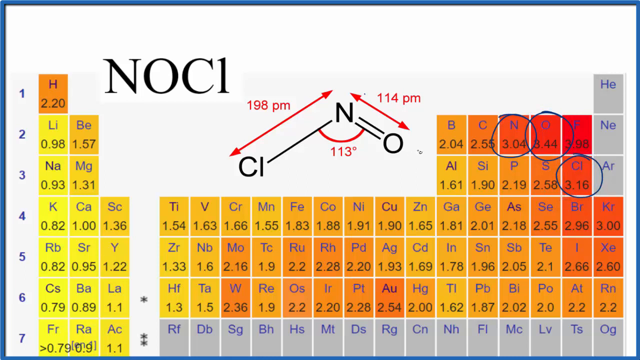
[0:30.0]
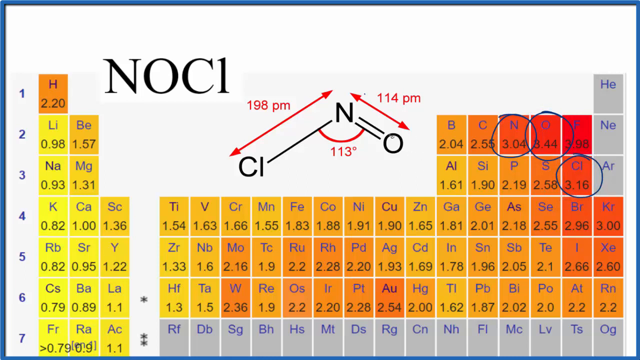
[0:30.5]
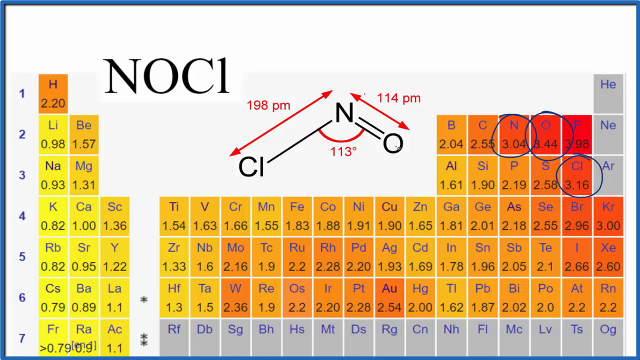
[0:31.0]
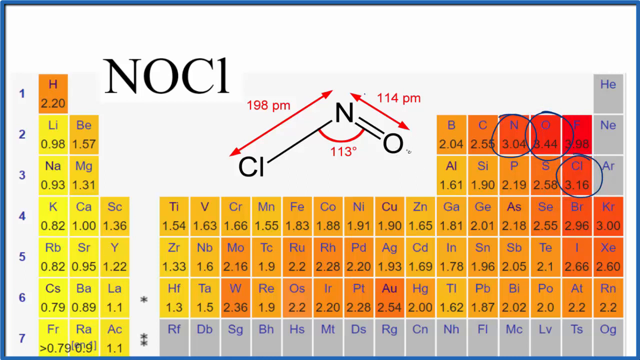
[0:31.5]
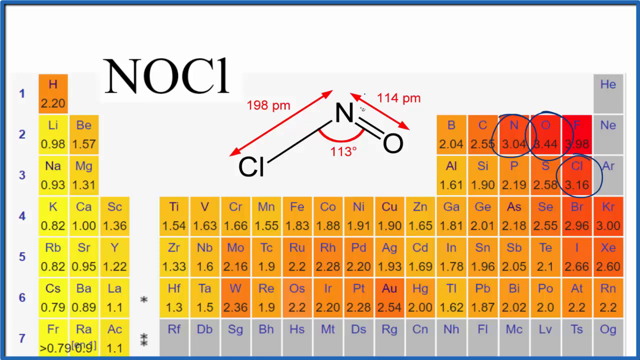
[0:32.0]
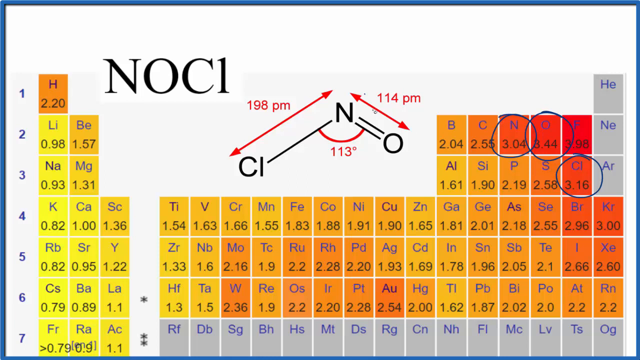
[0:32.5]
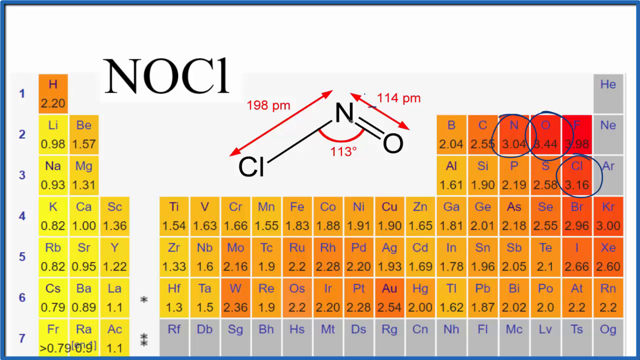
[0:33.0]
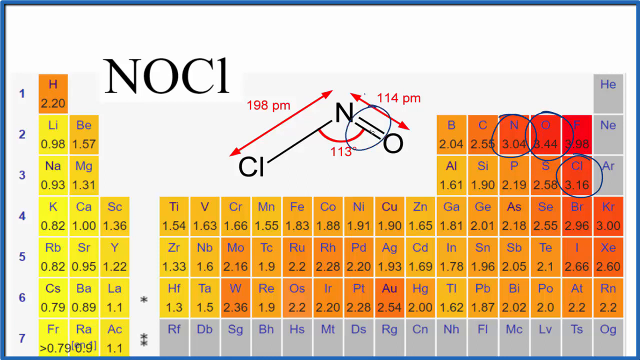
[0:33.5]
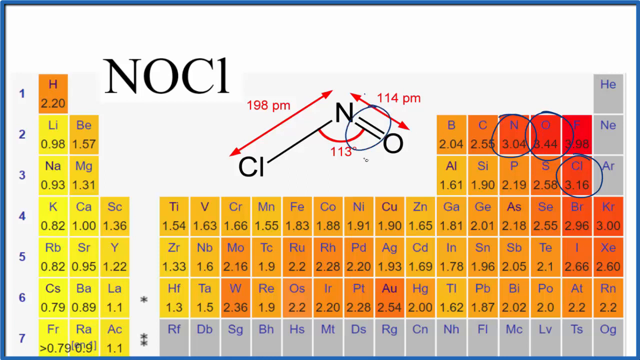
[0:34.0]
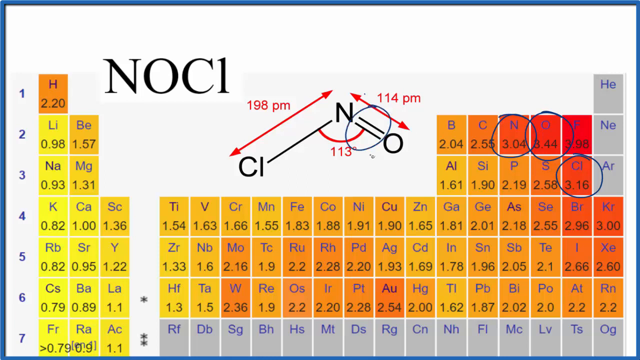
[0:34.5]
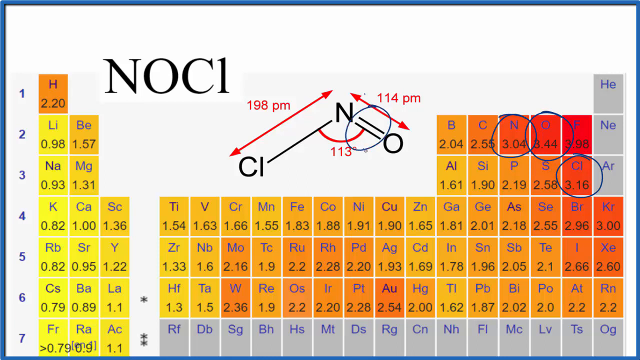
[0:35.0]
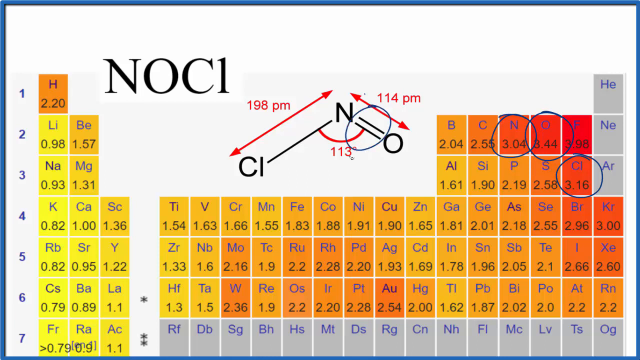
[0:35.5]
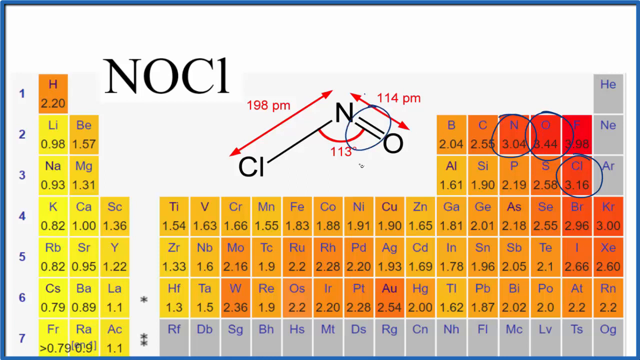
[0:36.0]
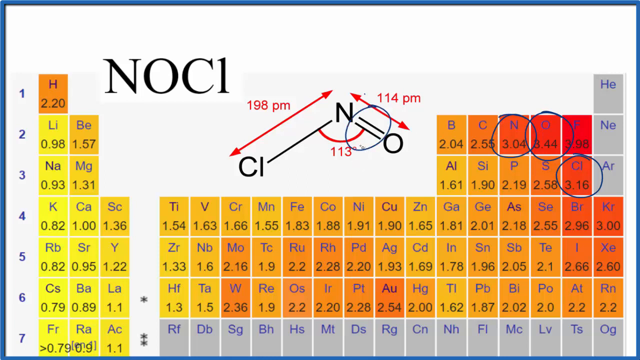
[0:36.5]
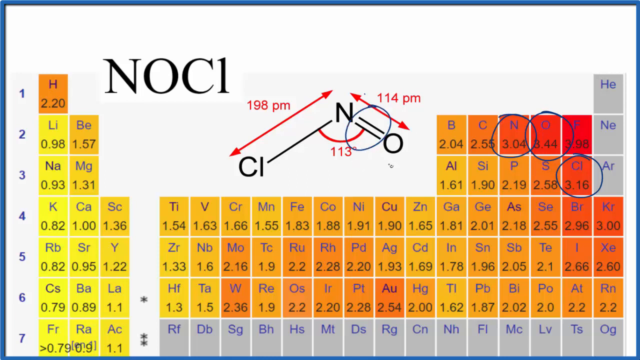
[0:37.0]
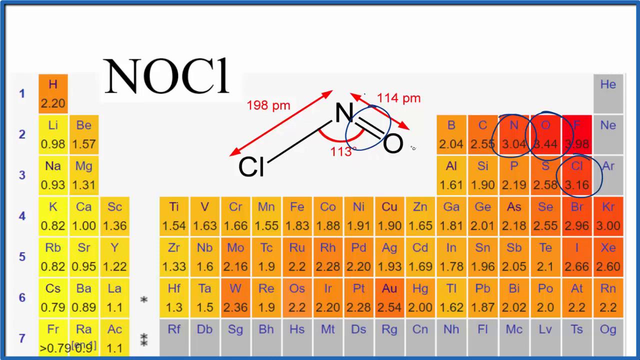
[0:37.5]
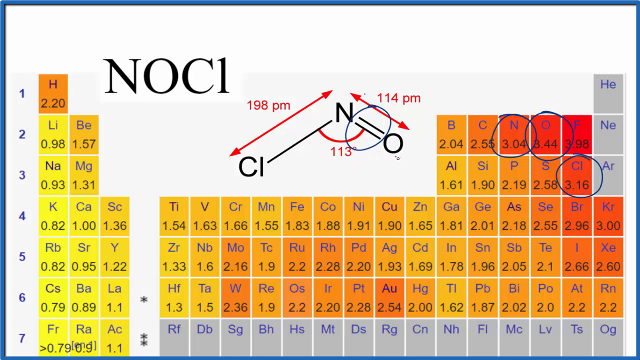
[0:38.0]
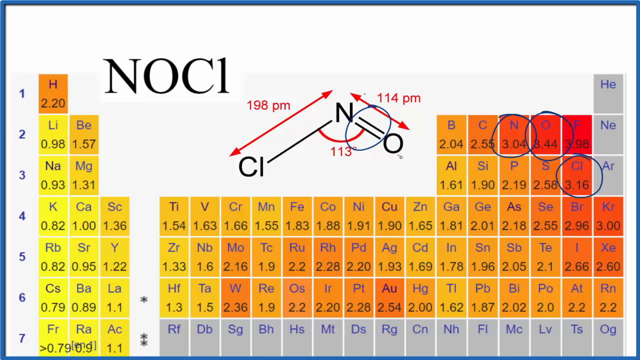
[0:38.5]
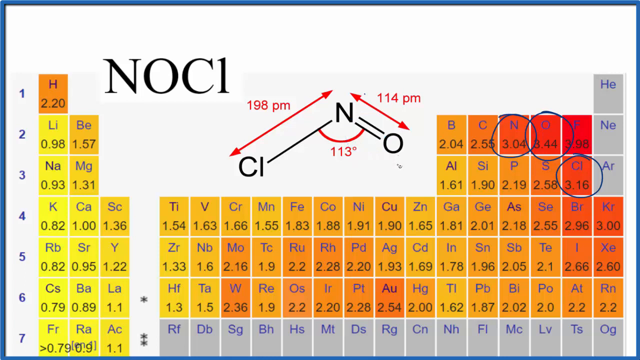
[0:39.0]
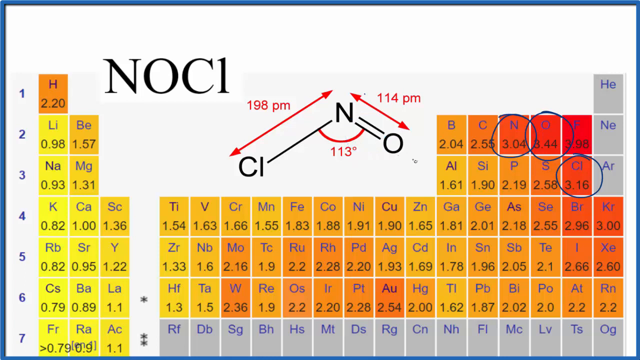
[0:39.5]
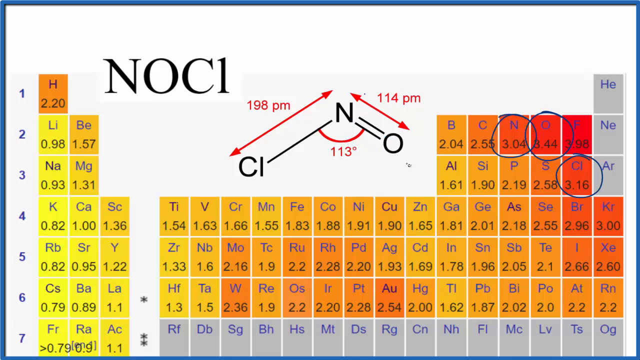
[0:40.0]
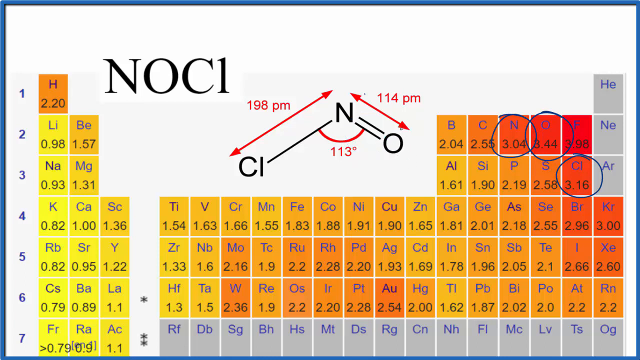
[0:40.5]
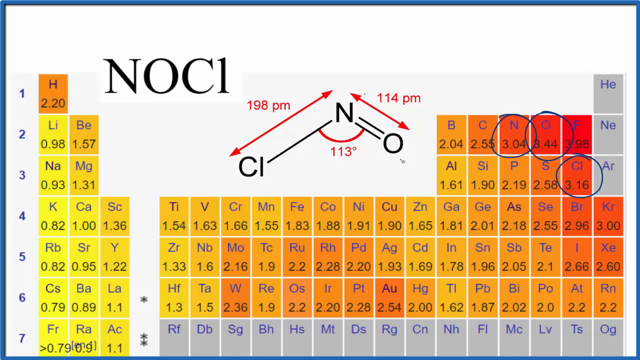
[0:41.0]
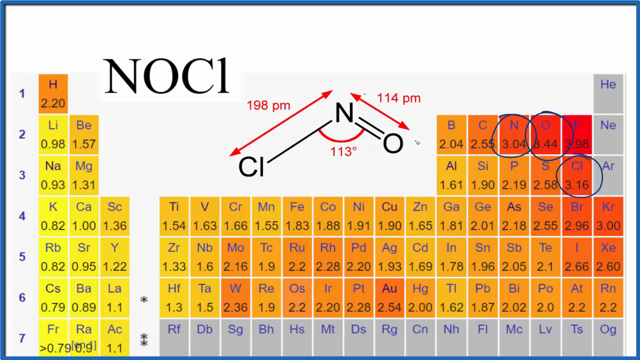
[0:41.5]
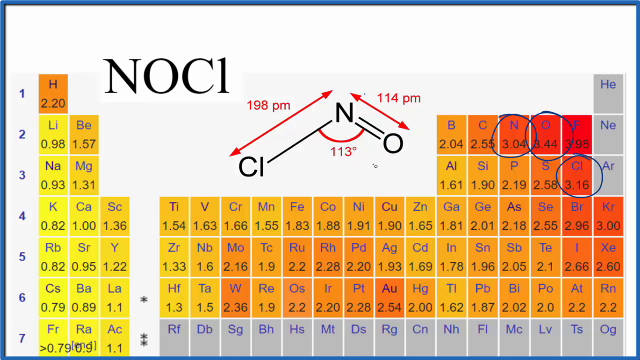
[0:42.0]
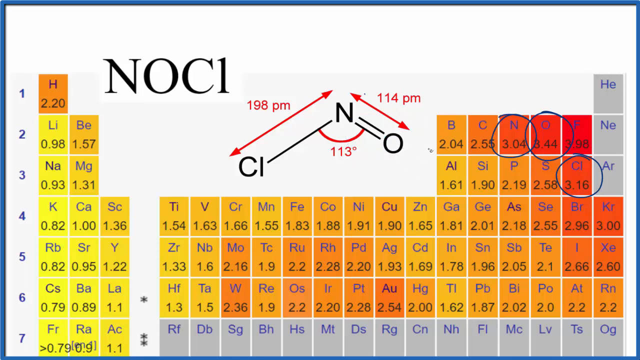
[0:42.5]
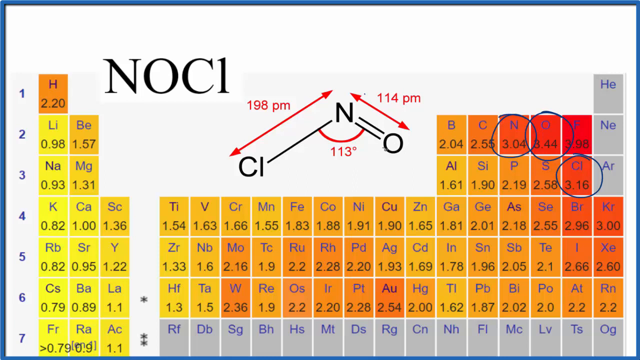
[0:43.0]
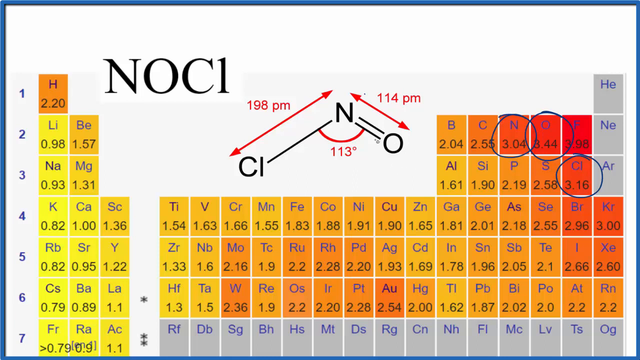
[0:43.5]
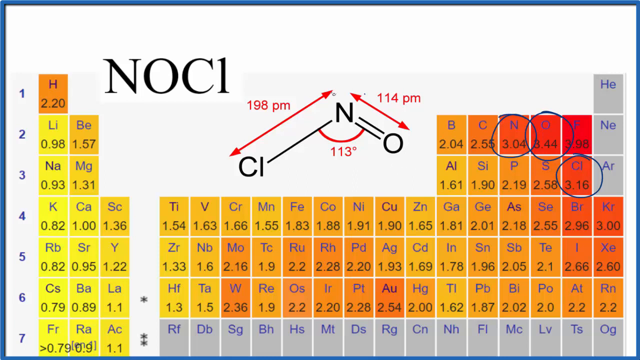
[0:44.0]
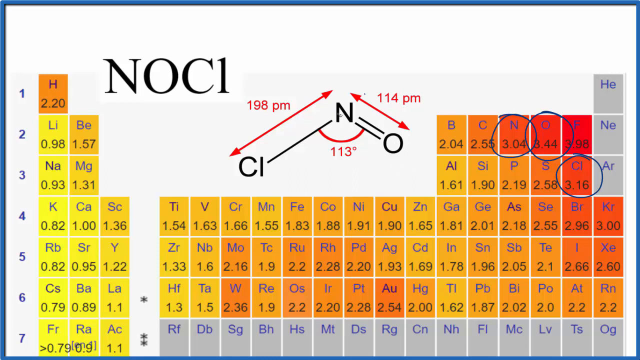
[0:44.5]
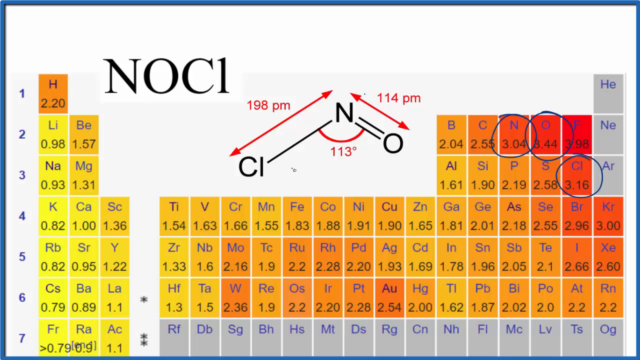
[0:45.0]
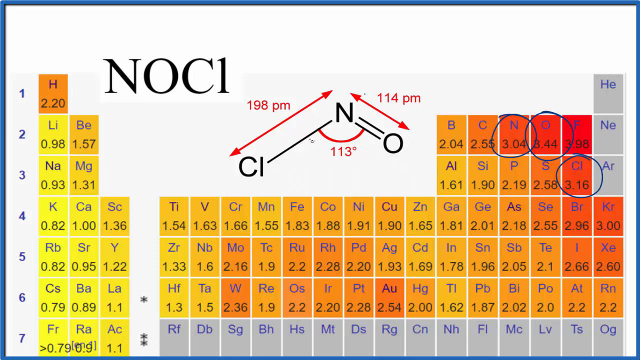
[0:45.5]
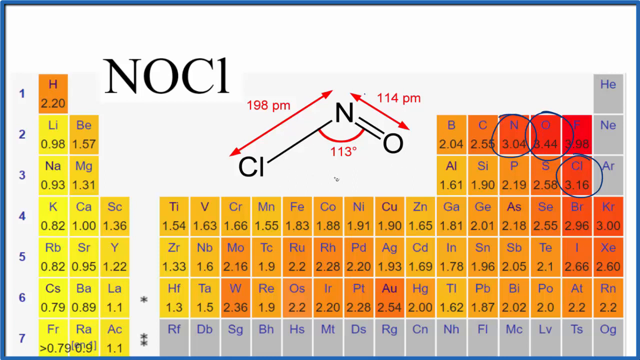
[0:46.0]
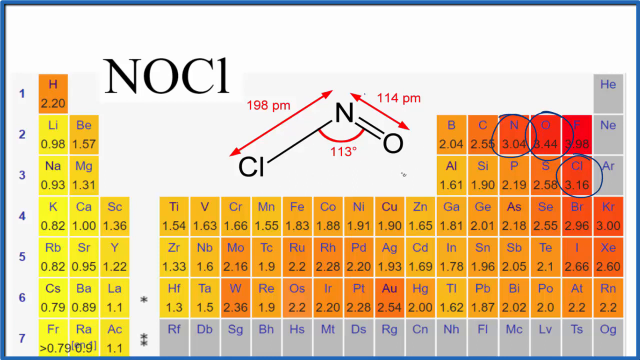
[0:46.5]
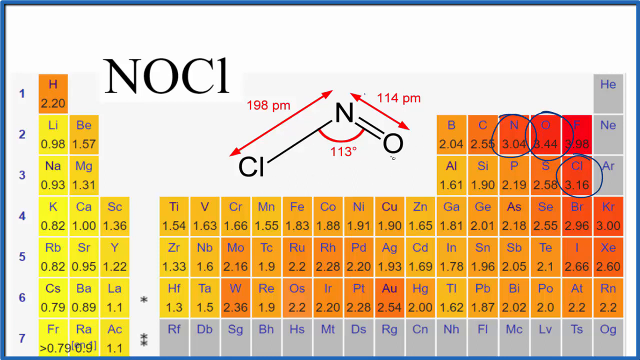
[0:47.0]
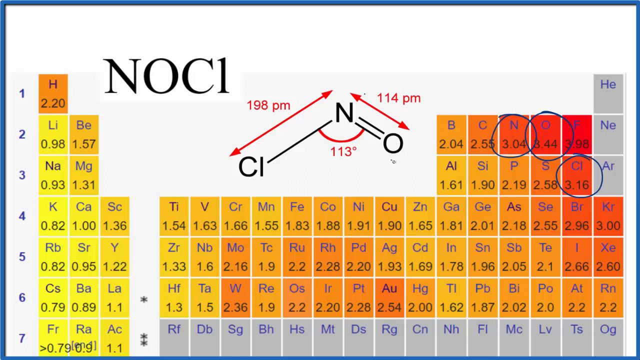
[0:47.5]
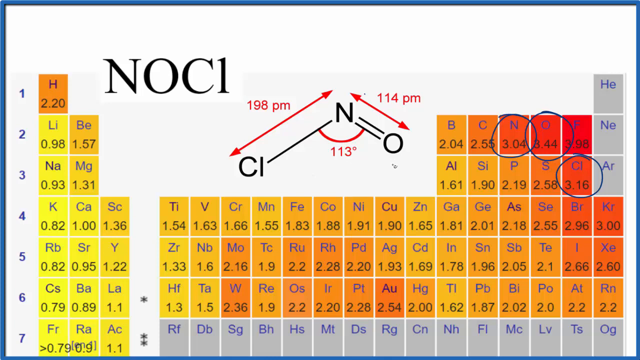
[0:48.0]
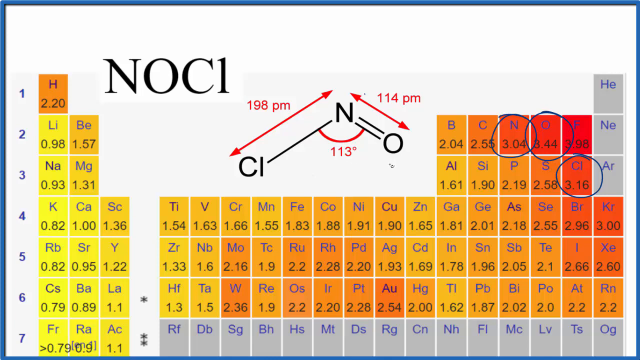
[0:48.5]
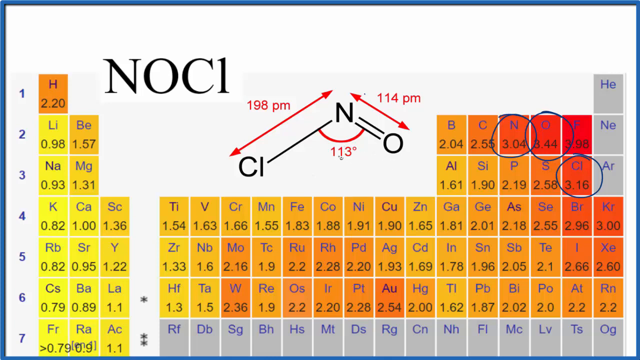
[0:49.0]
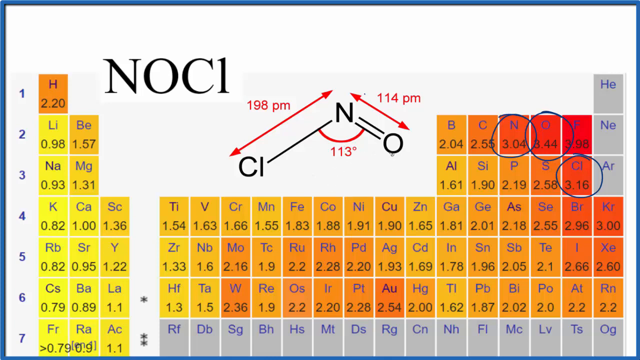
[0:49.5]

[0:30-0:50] Black circles remain around the N, the O and the CI, but the squares are gone. The cursor is over the N, then circles around the two lines going down to the O. It moves down to the O, moves around on it a little, and moves down to the right a little. The circle around the two lines from the N to the O vanishes. The cursor then seems to circle around the O without leaving any marks, then around the N, then around the CI, and goes back over to the O and moves back and forth a little underneath it. The background is white; across the top, where the periodic table is, it is a little bit of a light gray color. Down to the right, where it says "NOC1", in the middle is an N with a line going down to the left to a CI. Over this is a red arrow pointing up right and down left, with "198PM" above it to the left. On the right side of the N, two lines go down to the right to an O. Above this is a red arrow going up left and down right, with "114PM" in red above it. Under the N, a little half circle joins the line on the left side and the line on the right side, and underneath it says "113 degrees".